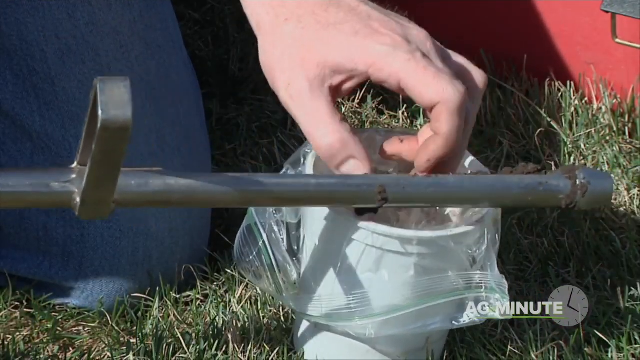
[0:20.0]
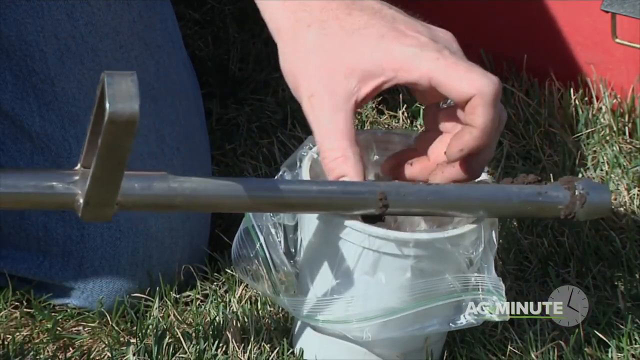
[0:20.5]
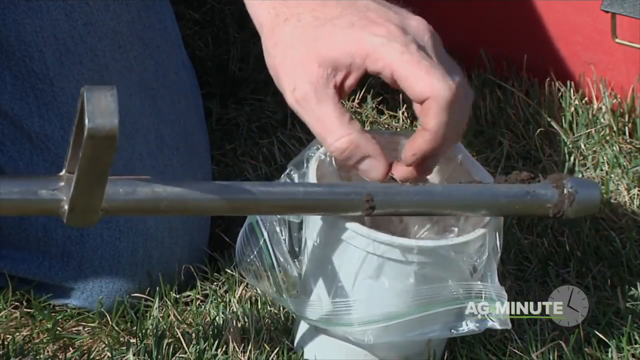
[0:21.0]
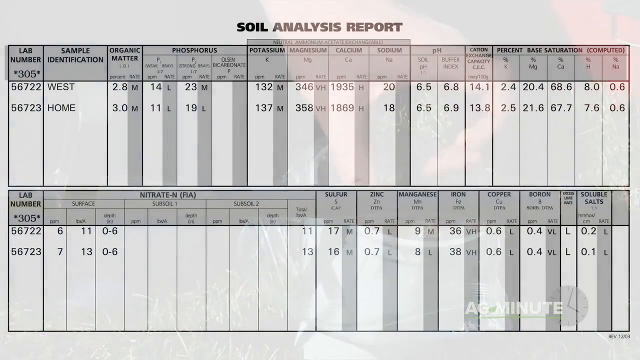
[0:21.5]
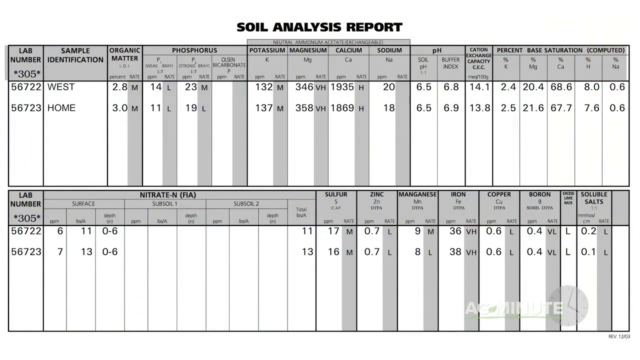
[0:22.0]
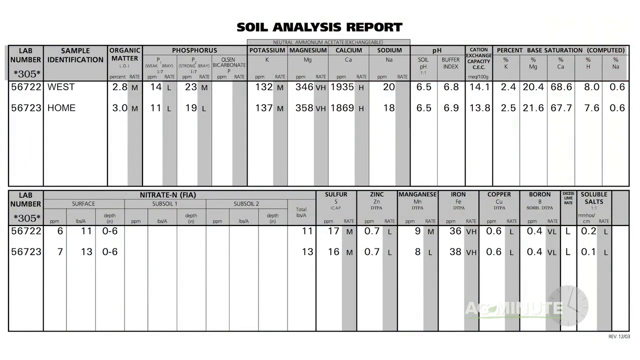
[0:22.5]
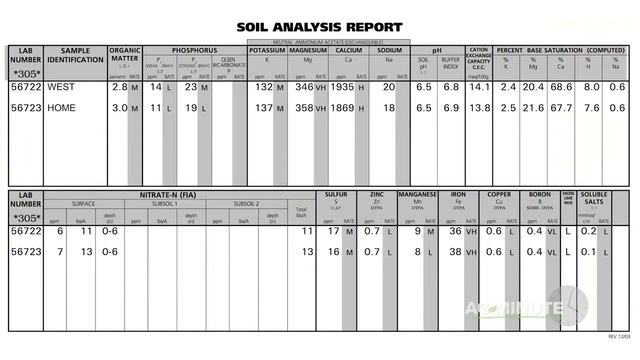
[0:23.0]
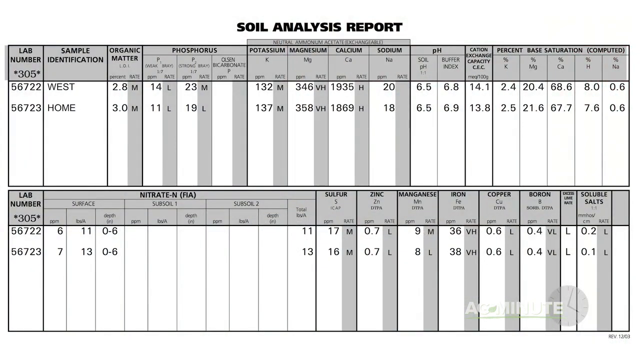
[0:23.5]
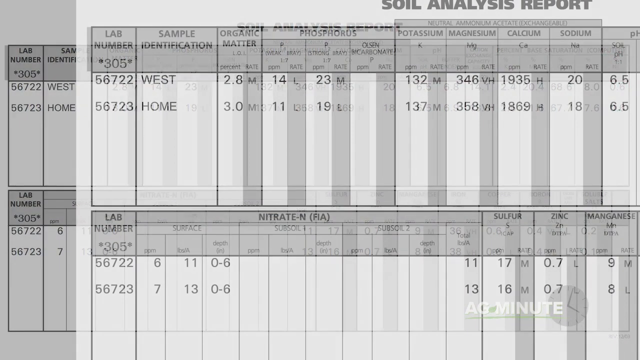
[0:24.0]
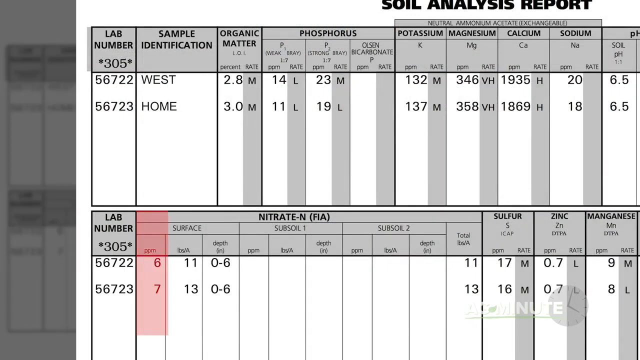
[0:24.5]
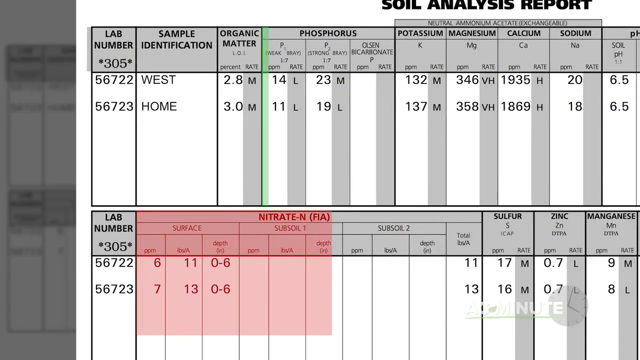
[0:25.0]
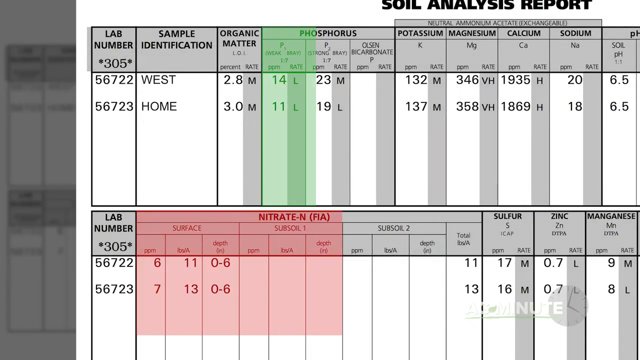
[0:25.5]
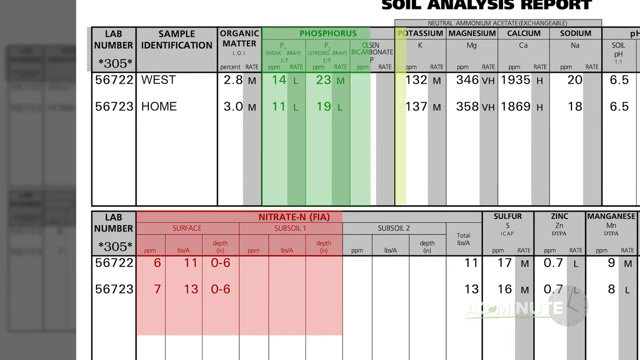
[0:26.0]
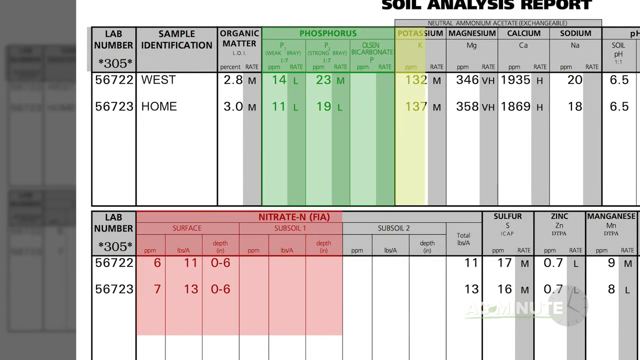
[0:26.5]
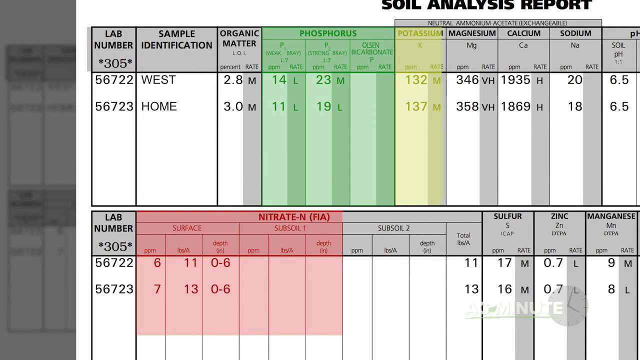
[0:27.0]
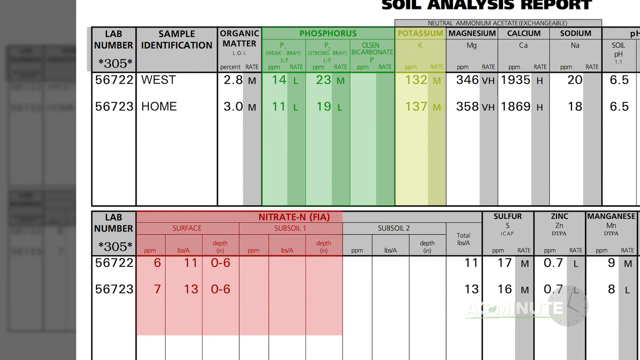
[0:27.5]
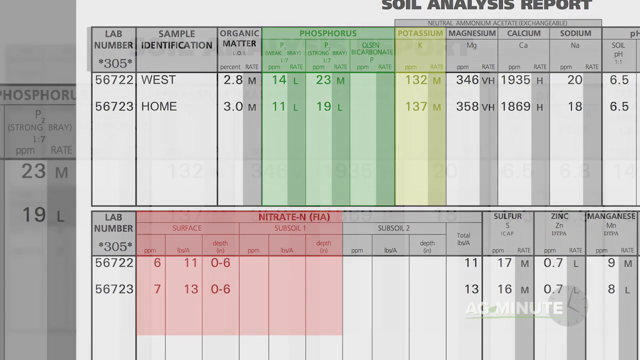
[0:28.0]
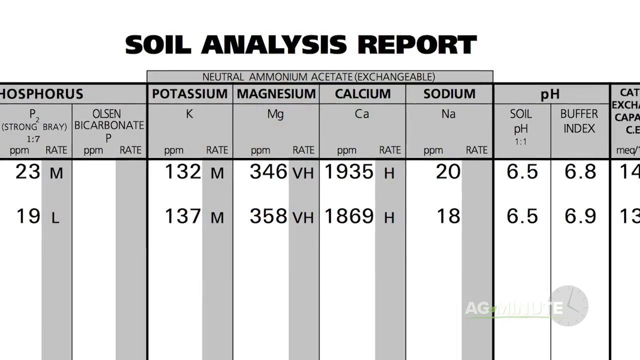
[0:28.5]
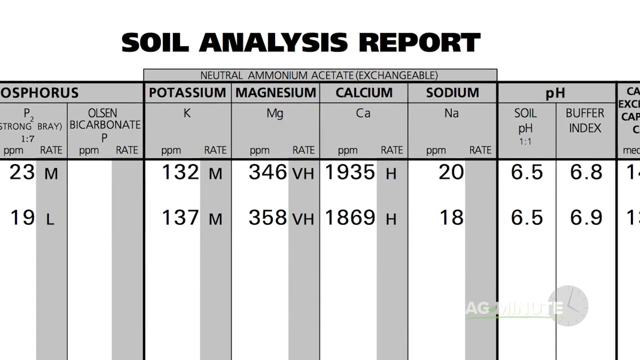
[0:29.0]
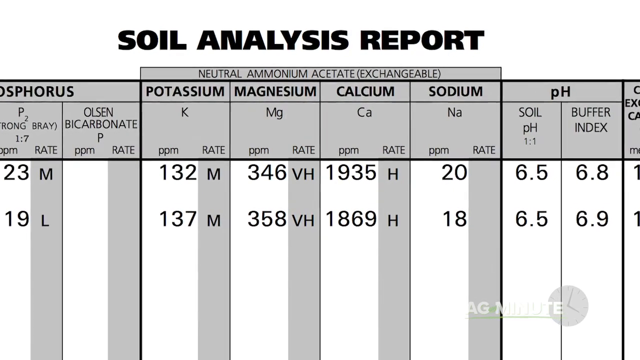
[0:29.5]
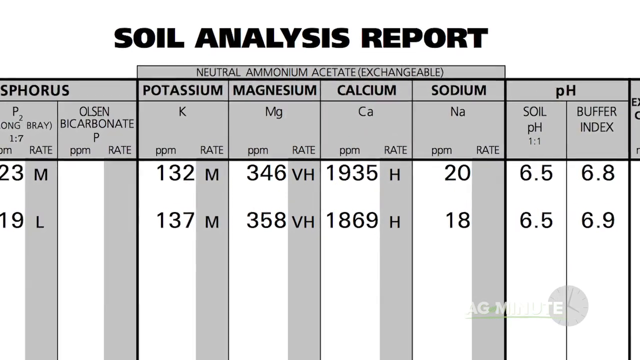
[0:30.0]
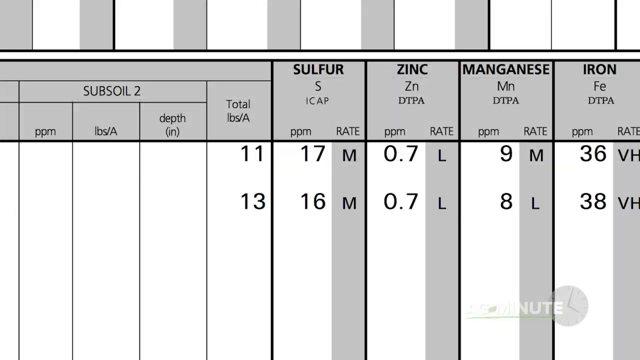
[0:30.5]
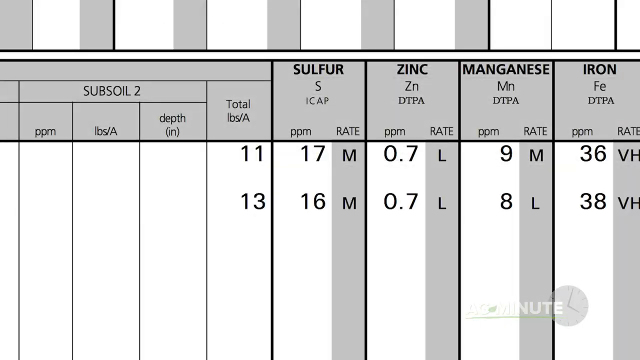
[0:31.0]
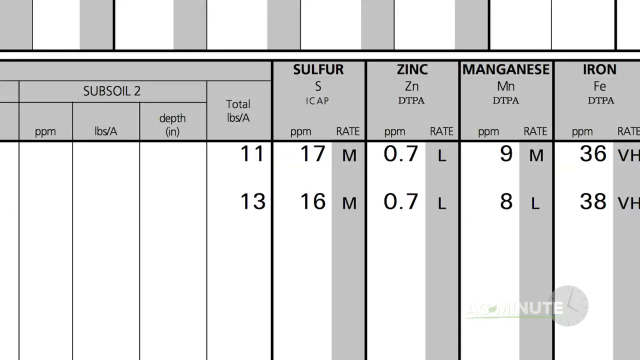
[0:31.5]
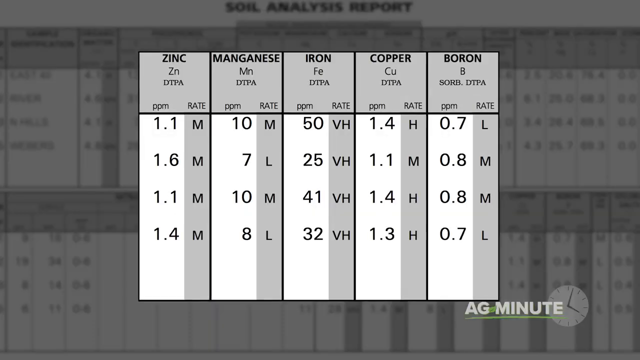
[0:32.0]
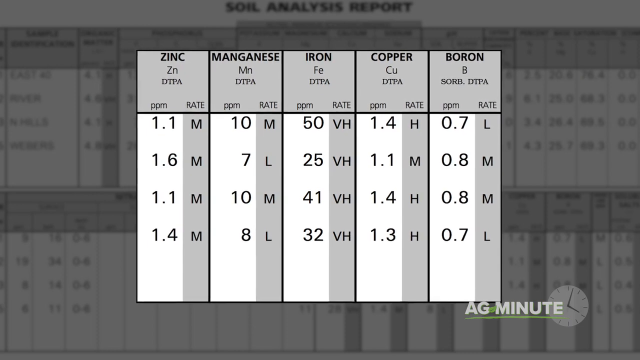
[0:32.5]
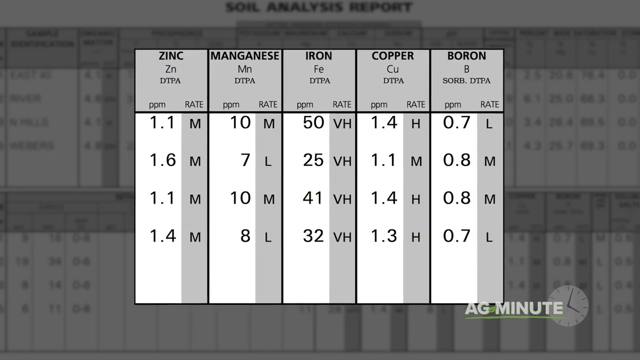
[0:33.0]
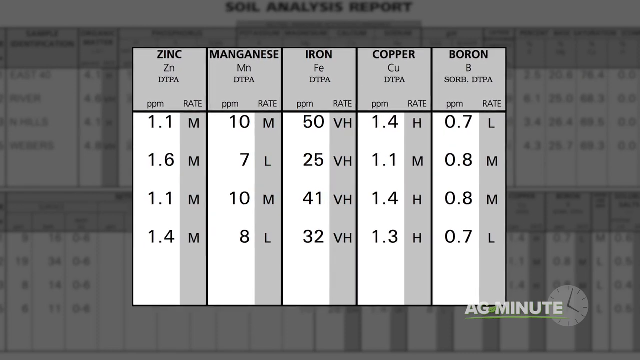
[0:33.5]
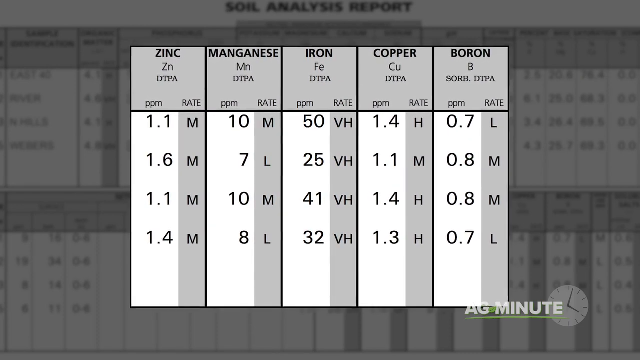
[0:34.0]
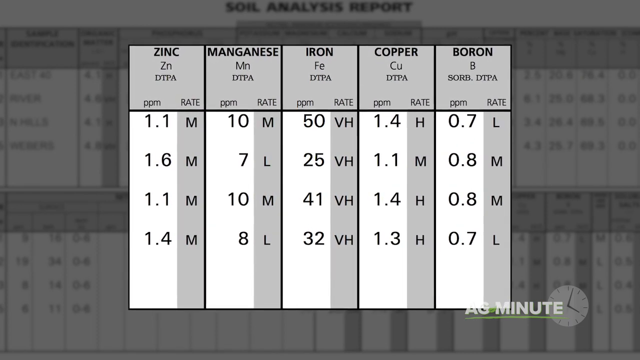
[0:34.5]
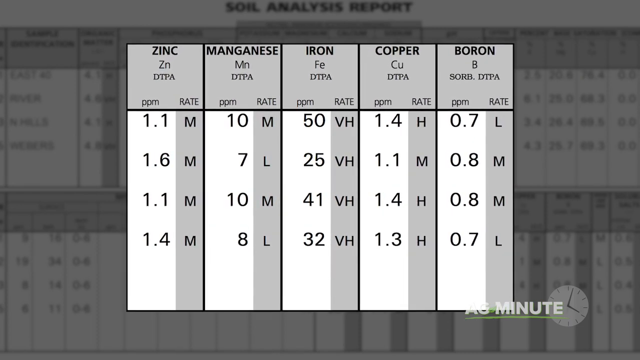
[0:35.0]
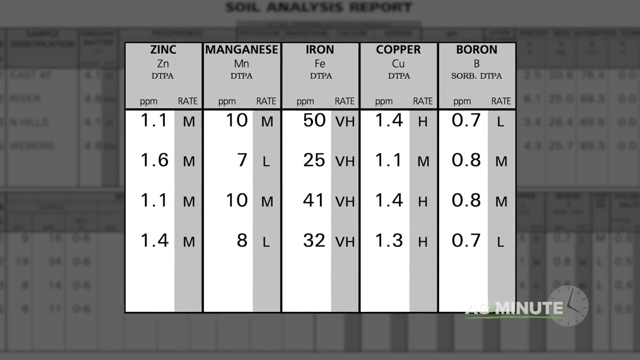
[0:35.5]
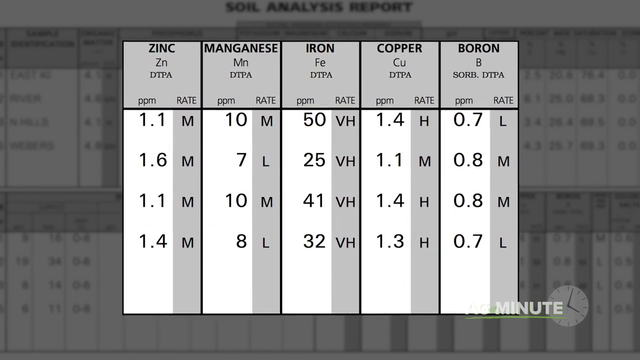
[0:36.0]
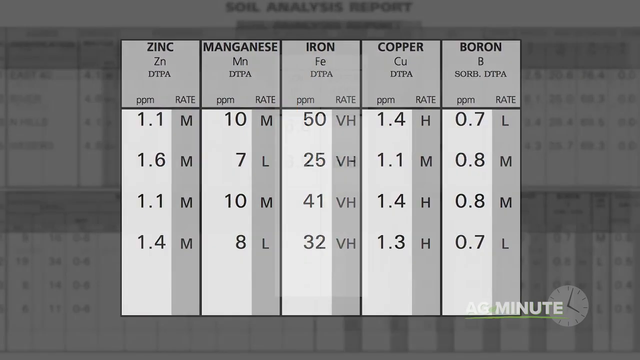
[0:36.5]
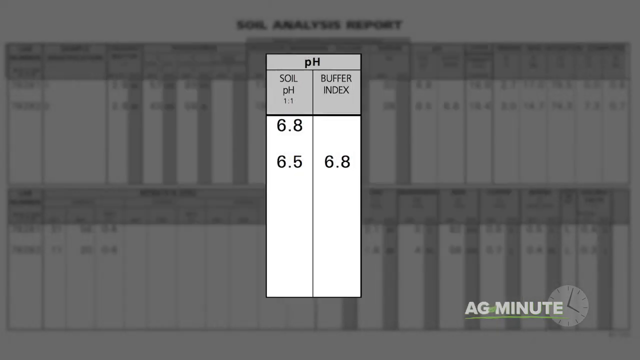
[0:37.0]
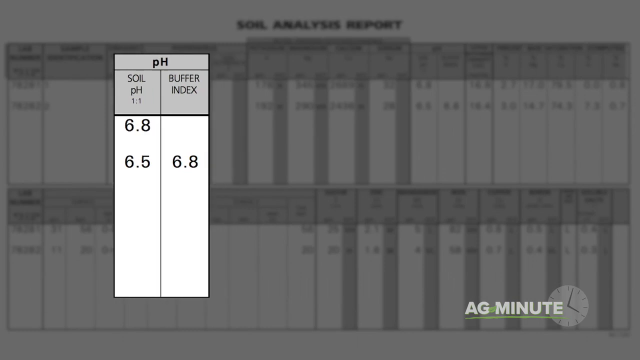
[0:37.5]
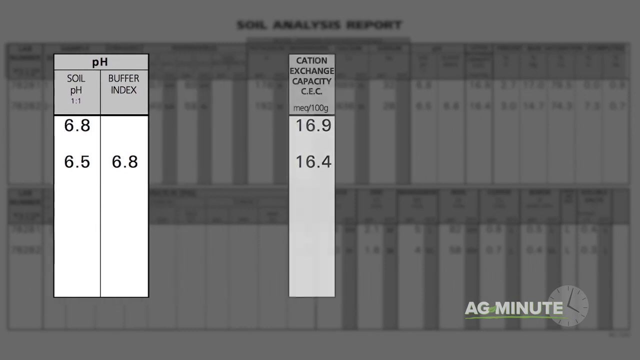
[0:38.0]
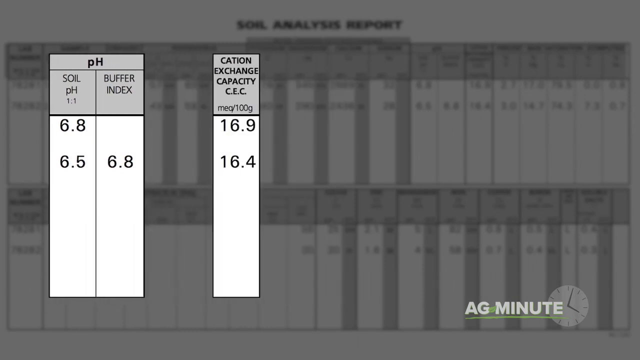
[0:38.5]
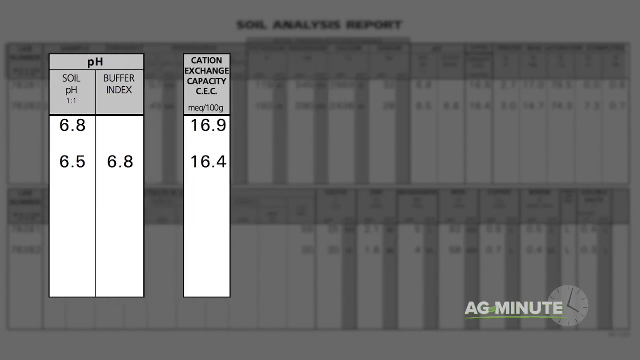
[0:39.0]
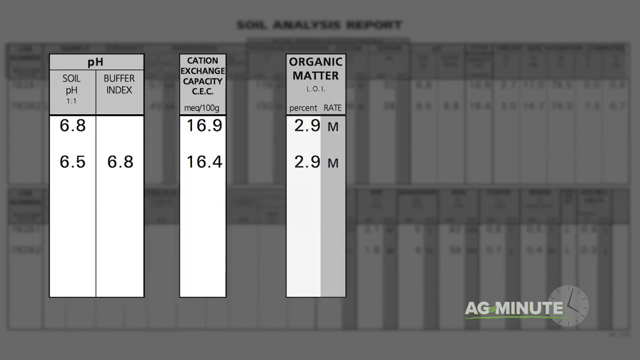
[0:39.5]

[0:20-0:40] A soil analysis report is shown. The lab number is 305, and there are numbers 65722 and 65723. There is a sample identification, and the organic matter values are 2.8 and 3.20. Potassium is 132, magnesium 346, calcium 936, sodium 20, and phosphate 6.5 and 6.8.